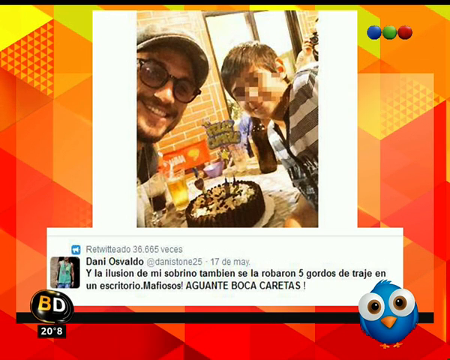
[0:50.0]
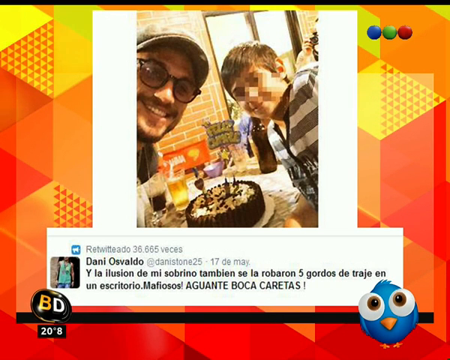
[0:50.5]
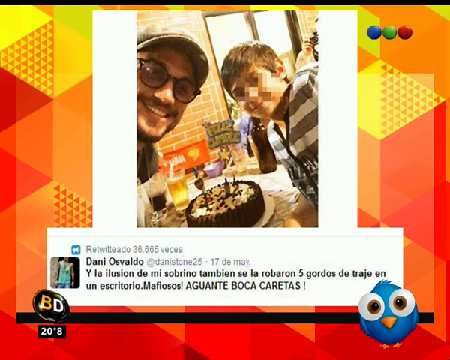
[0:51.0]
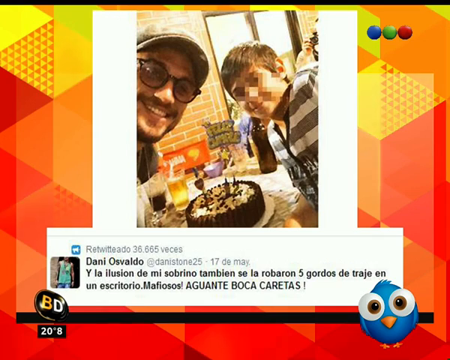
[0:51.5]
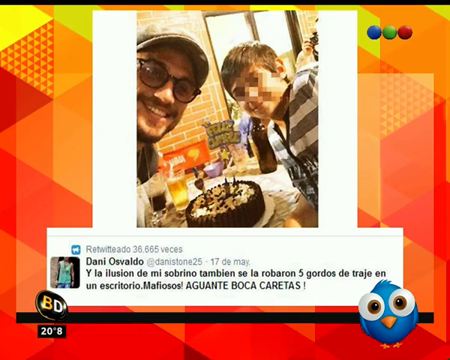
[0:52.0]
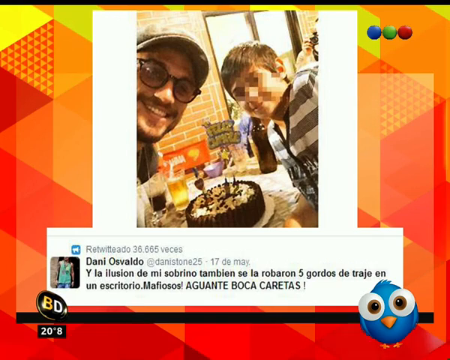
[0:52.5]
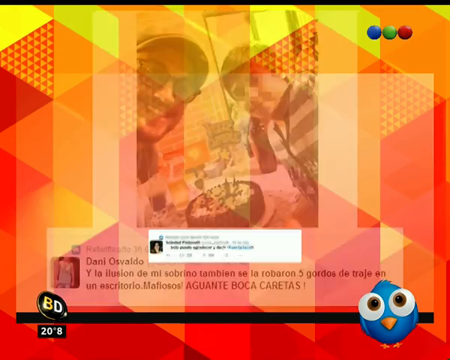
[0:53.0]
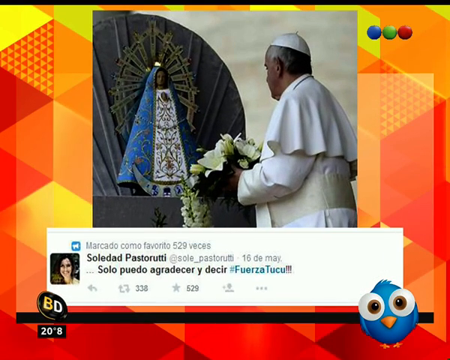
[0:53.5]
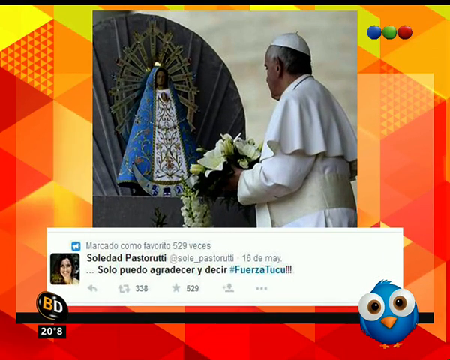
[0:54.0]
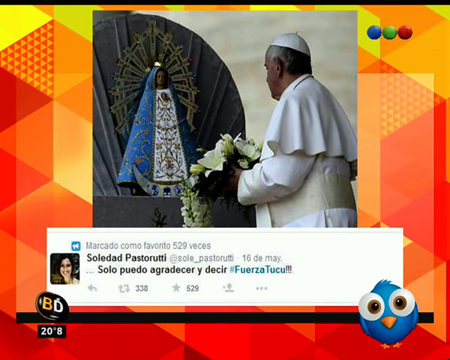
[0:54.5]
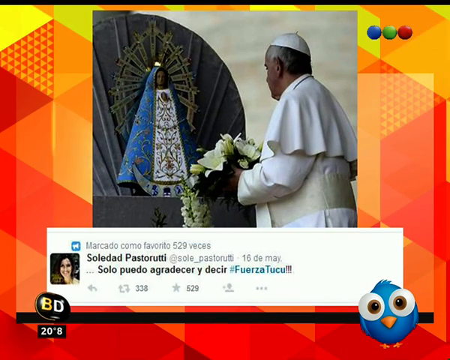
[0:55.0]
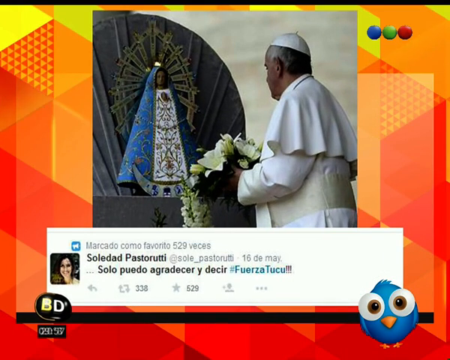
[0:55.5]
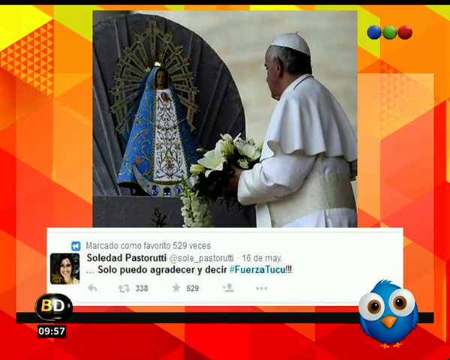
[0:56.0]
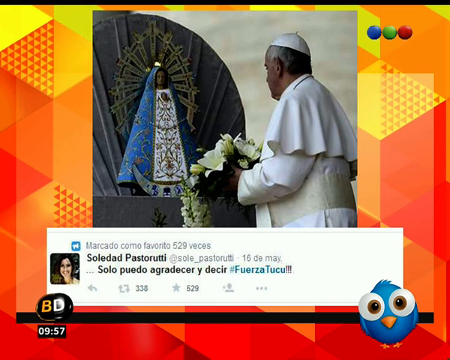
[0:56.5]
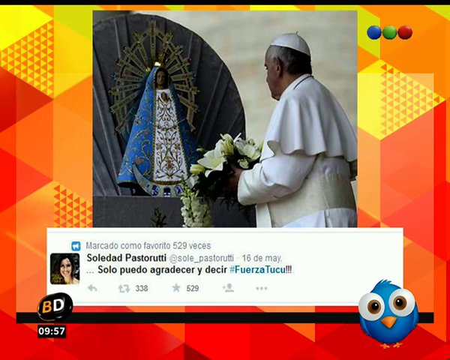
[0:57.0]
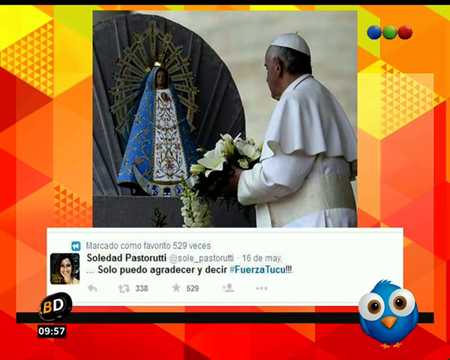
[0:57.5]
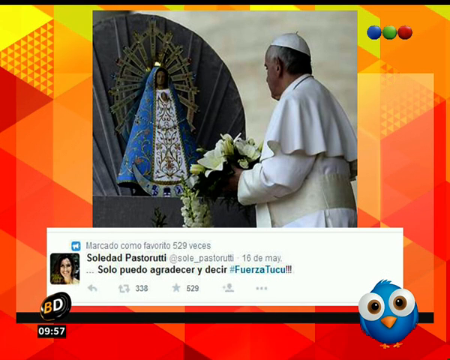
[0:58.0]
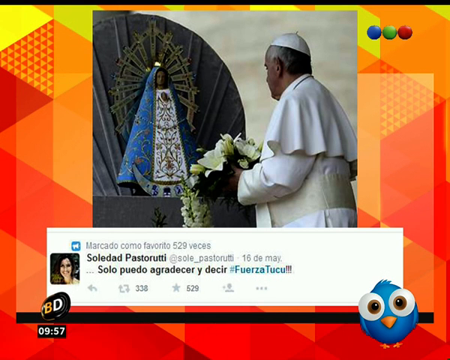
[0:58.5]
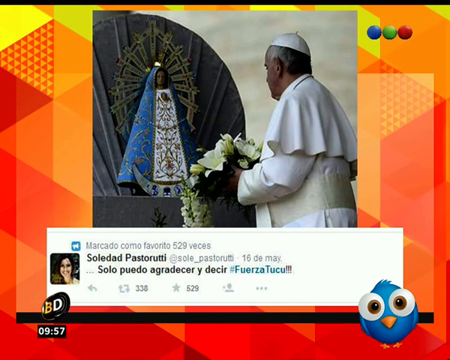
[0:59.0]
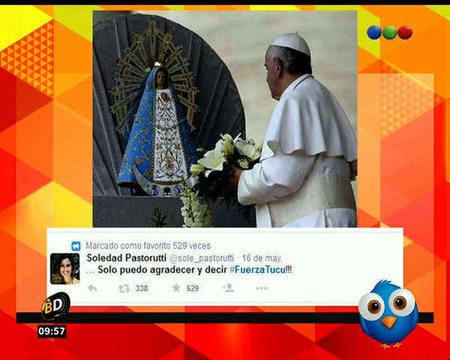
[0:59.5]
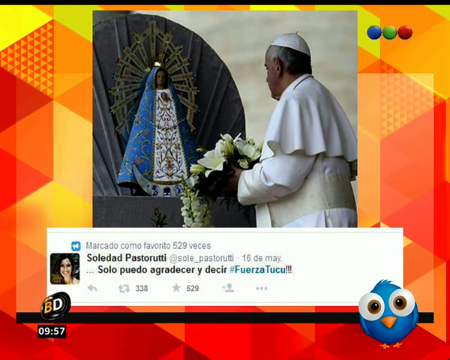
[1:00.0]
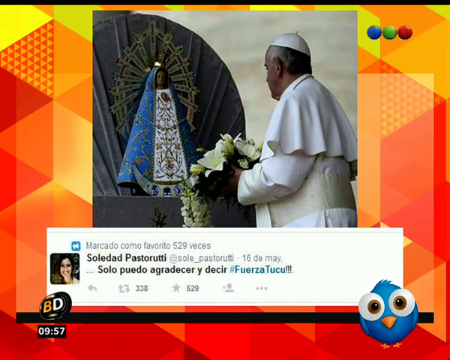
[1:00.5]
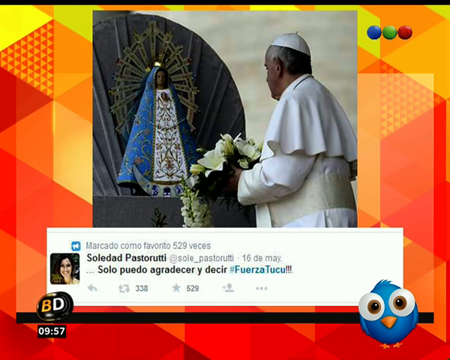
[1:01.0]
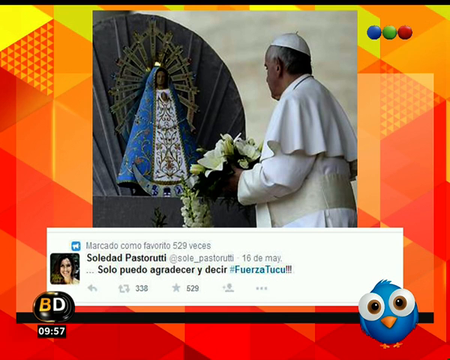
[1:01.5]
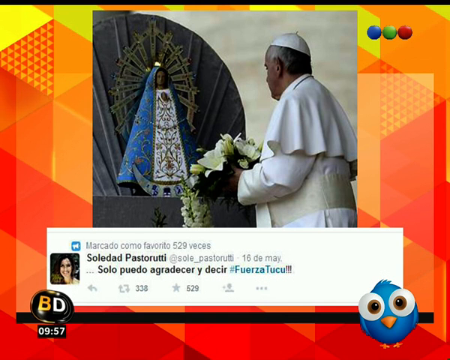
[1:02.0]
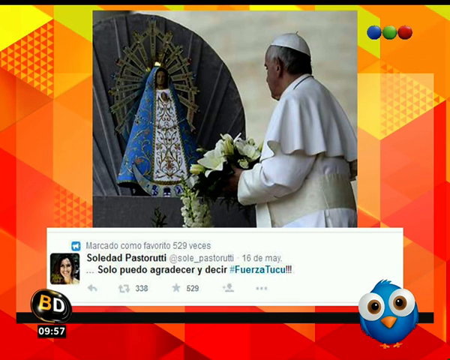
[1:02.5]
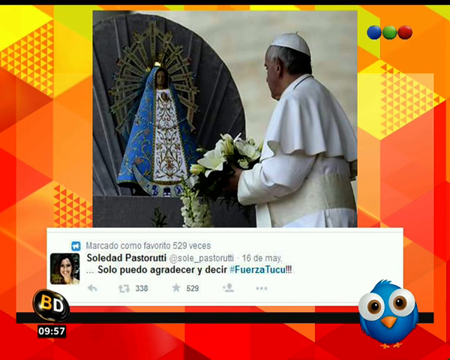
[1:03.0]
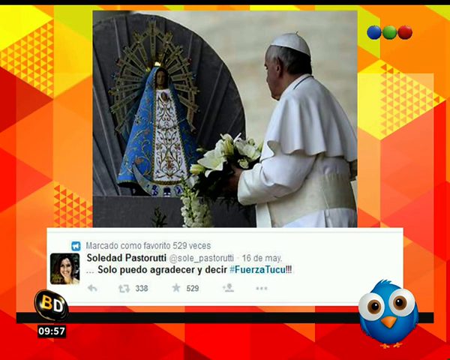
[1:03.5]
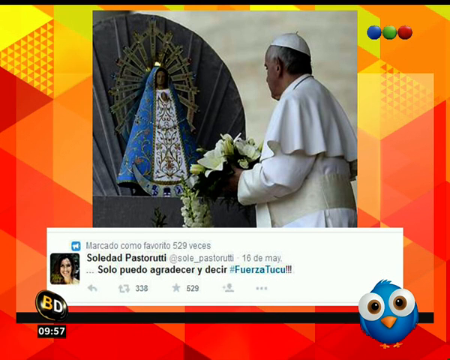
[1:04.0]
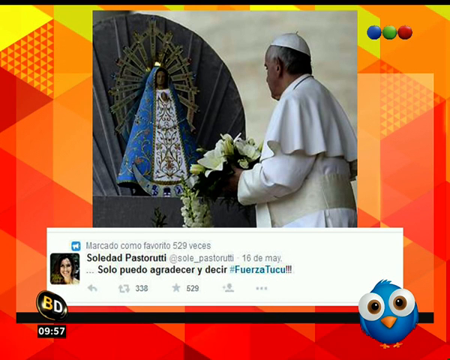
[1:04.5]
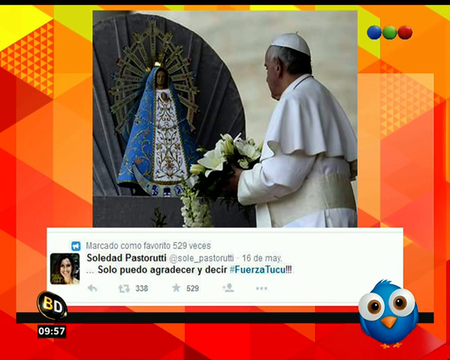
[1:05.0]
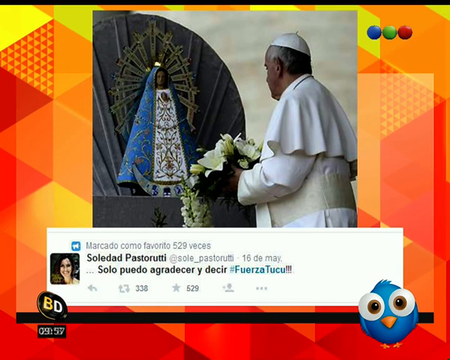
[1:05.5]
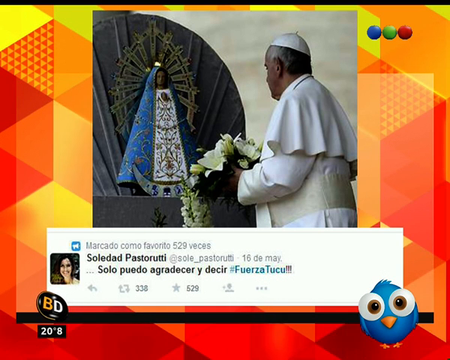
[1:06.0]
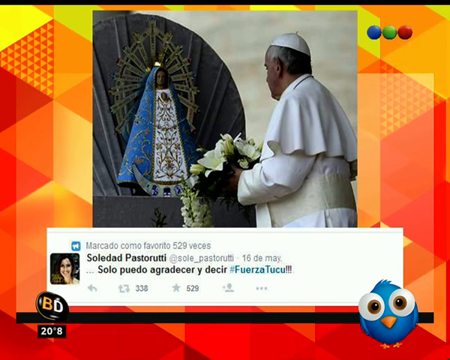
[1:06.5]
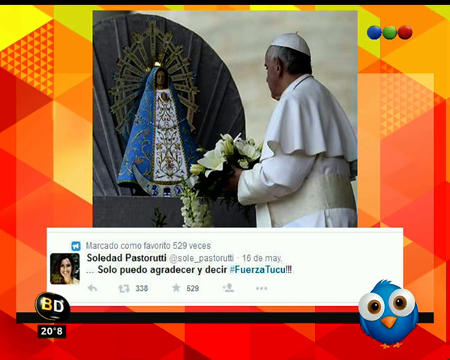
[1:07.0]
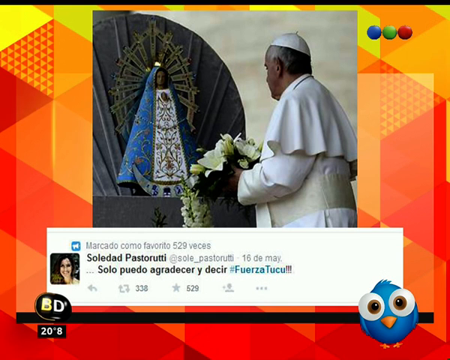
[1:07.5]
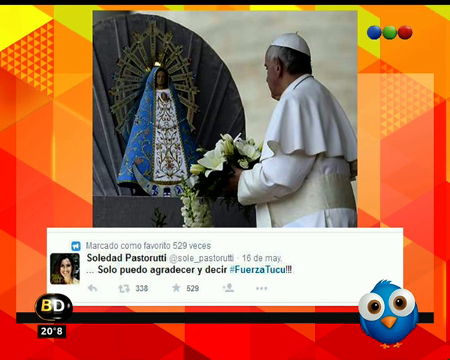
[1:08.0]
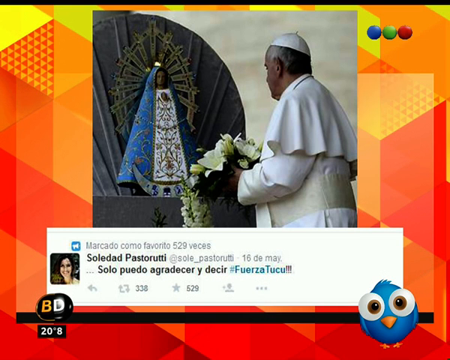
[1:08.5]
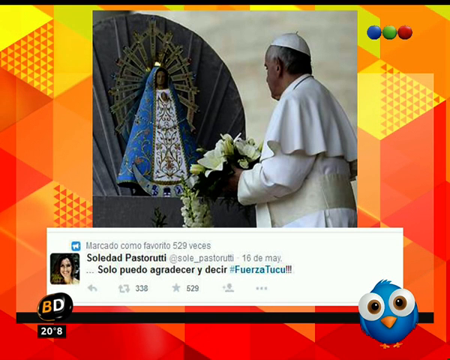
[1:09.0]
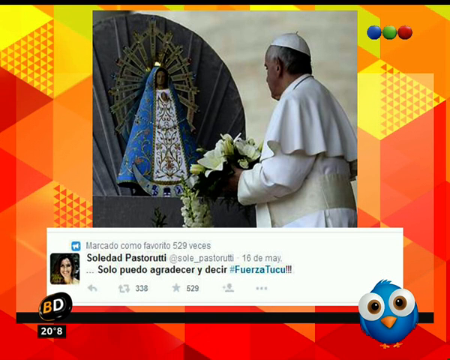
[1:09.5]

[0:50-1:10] The background is yellow with red in it, and to the right are three circles: blue, green and red. A picture shows a man and a boy. The man wears a gray hat and black sunglasses. The boy wears a gray and white striped shirt, has short brown hair, and his face is blurred out. Someone behind the boy is taking a picture with a camera. The cake is chocolate with cream in the middle, and it has hearts and candles and says "12." There is text in a different language. "BD" is at the bottom left, and a picture of the bird is on the right. Next comes a picture of the Pope holding white flowers in his hands, standing in front of a statue of Mary, who wears a blue dress with white in the front. He is looking at the statue. Underneath, text reads "Marcato Como Favorito, 529 votes," along with text in another language. The post shows 338 retweets and 529 favorites, along with the picture of the person who posted it.